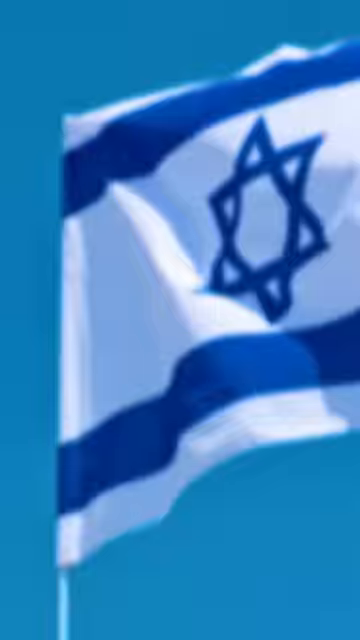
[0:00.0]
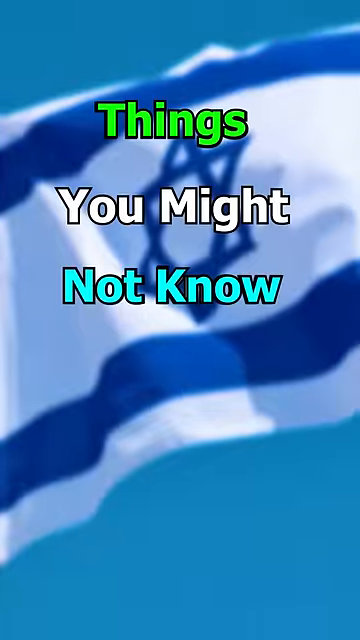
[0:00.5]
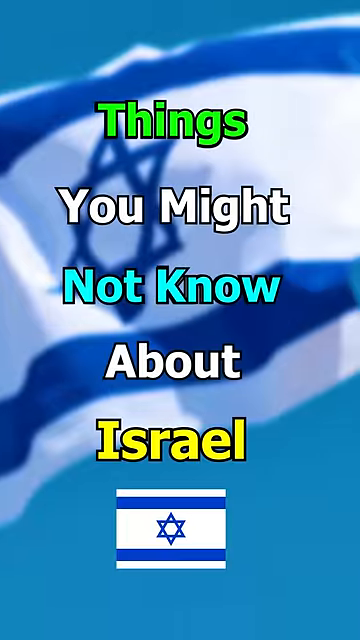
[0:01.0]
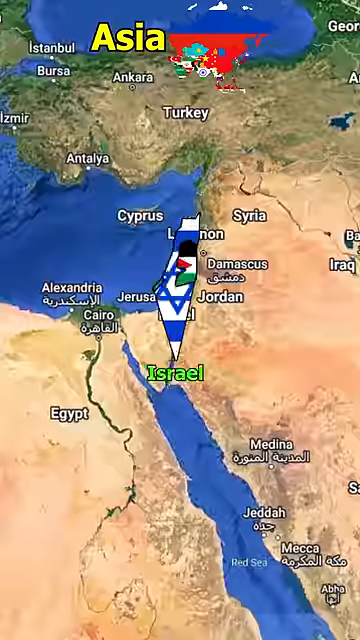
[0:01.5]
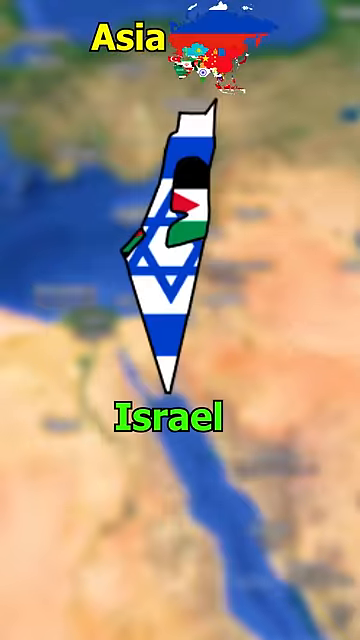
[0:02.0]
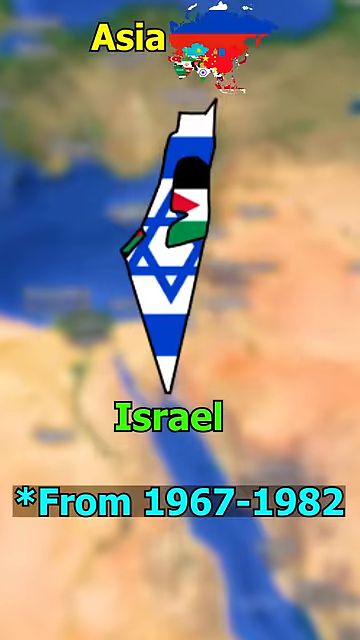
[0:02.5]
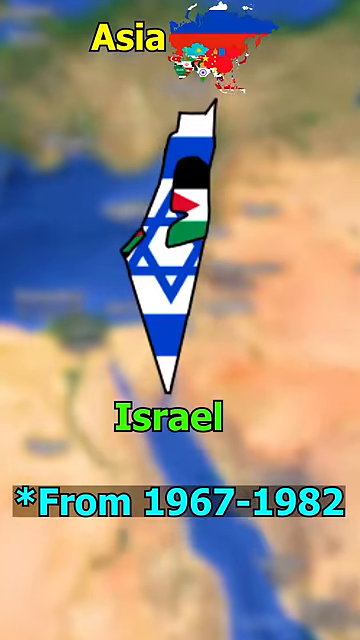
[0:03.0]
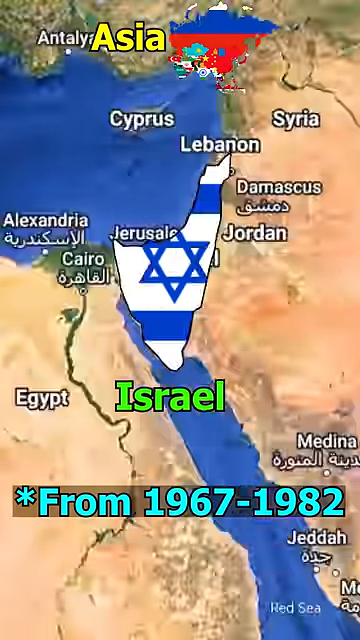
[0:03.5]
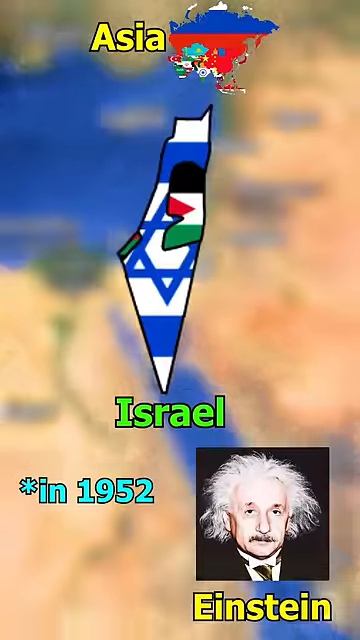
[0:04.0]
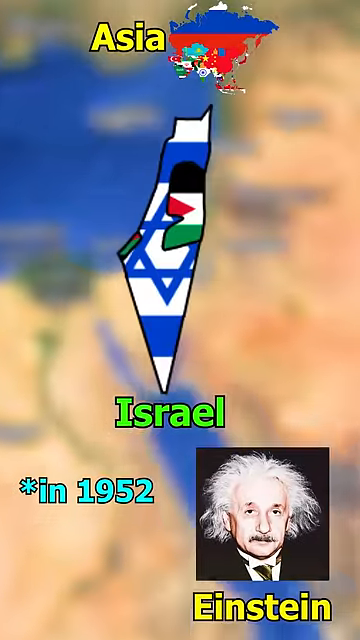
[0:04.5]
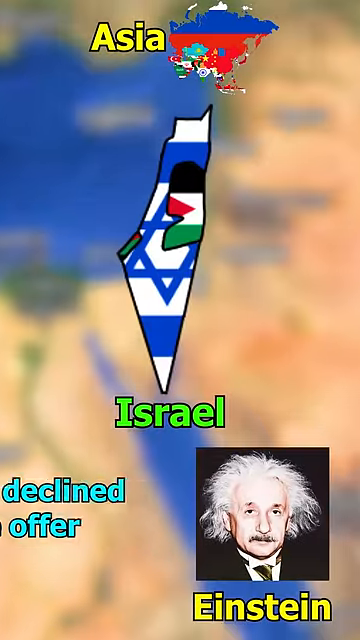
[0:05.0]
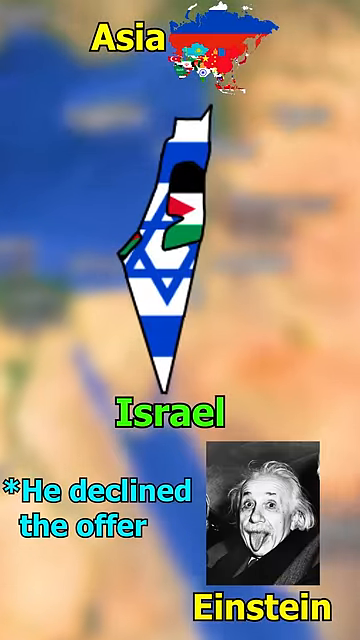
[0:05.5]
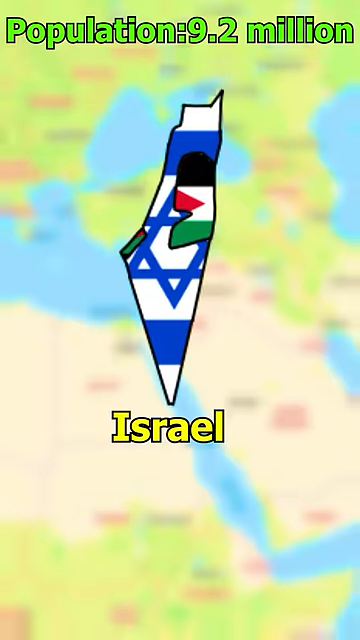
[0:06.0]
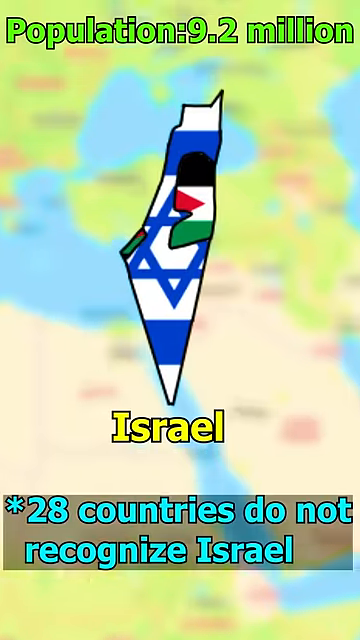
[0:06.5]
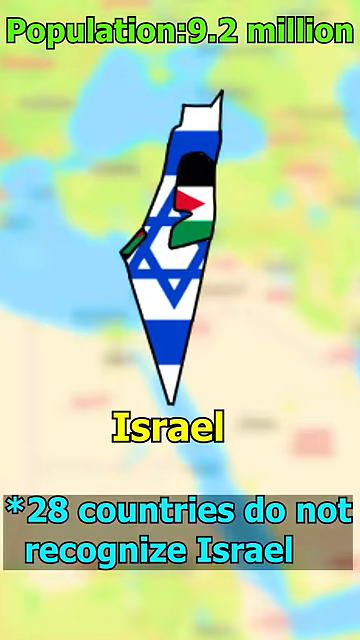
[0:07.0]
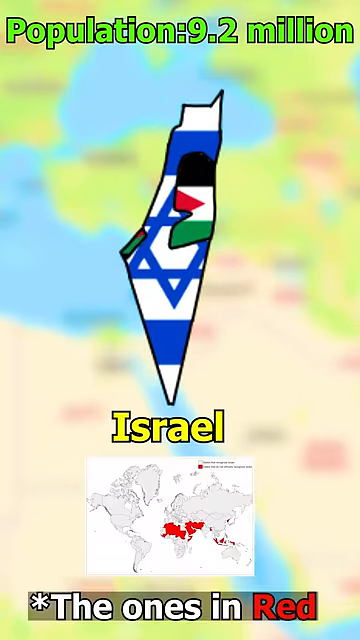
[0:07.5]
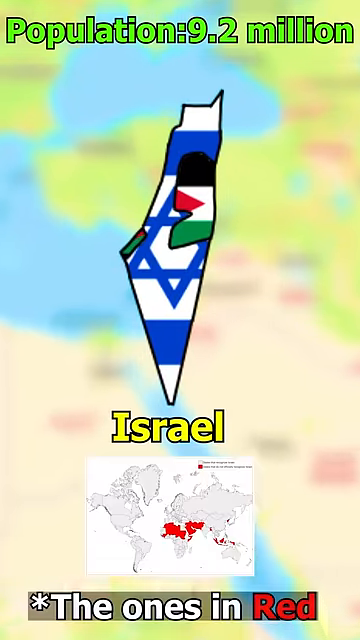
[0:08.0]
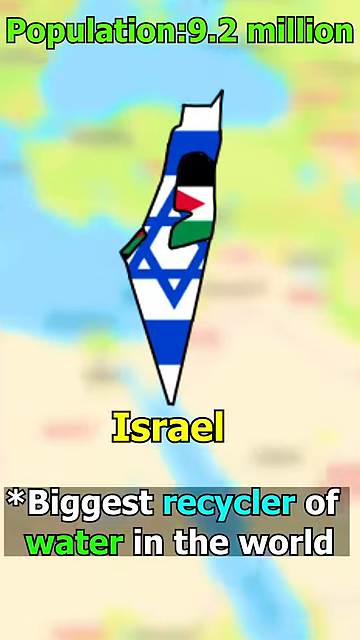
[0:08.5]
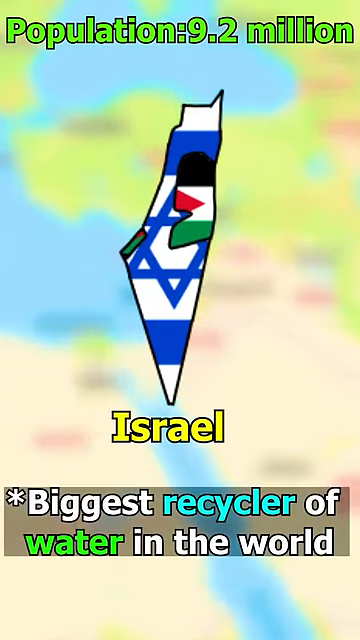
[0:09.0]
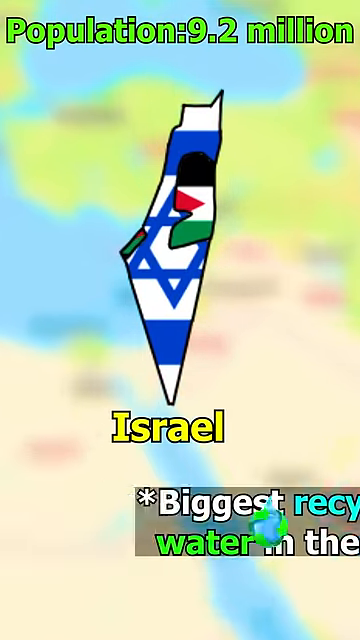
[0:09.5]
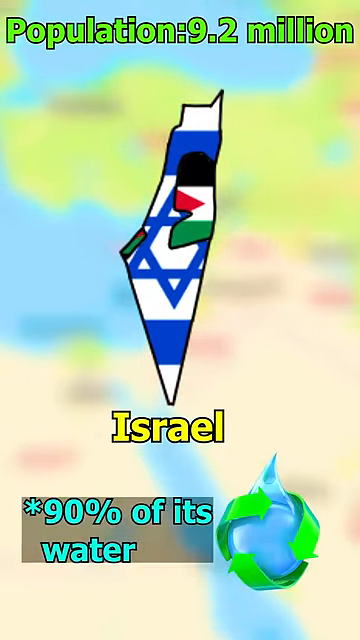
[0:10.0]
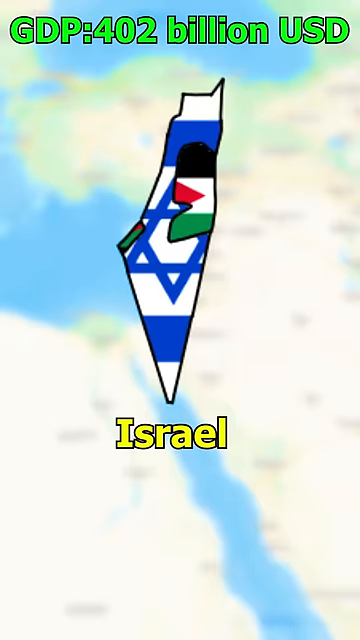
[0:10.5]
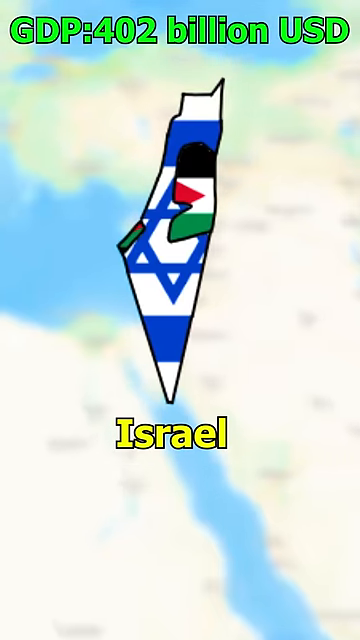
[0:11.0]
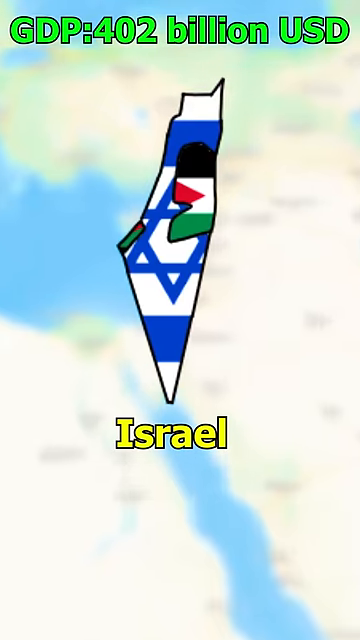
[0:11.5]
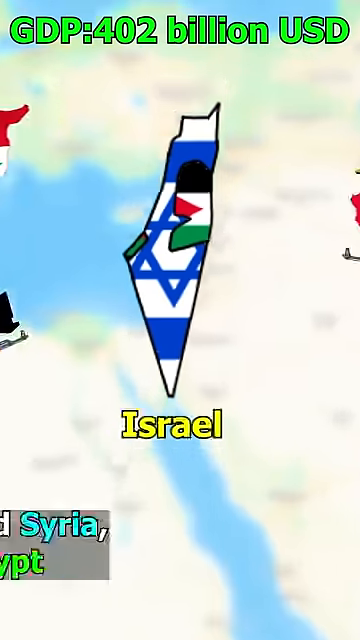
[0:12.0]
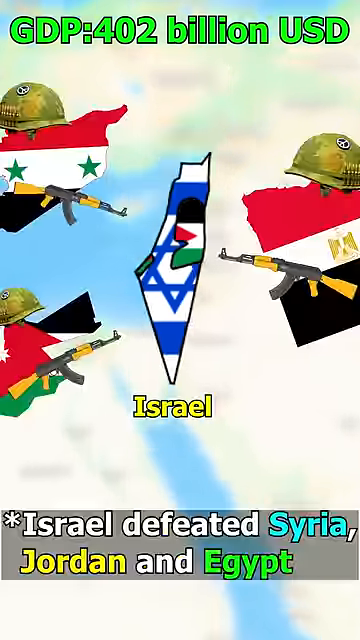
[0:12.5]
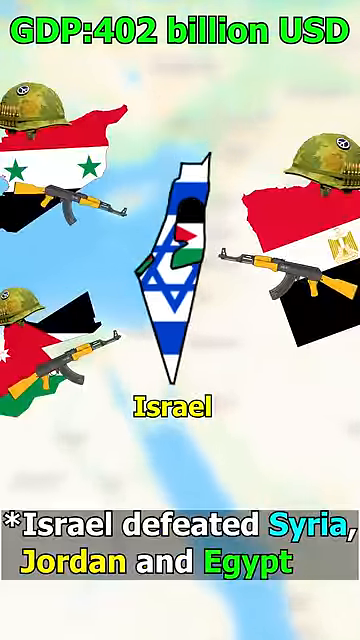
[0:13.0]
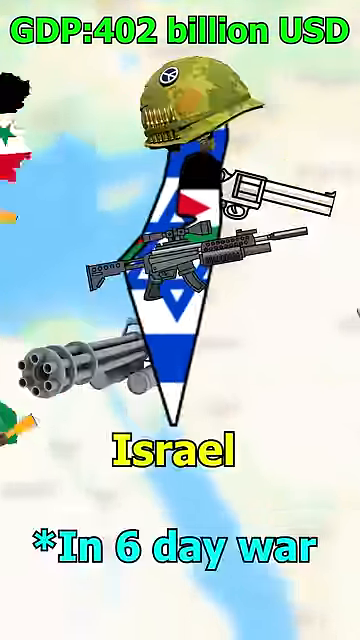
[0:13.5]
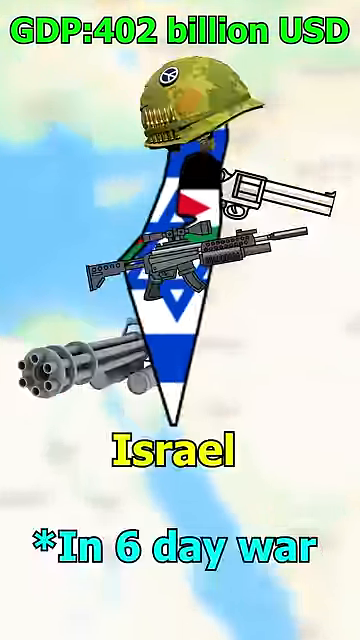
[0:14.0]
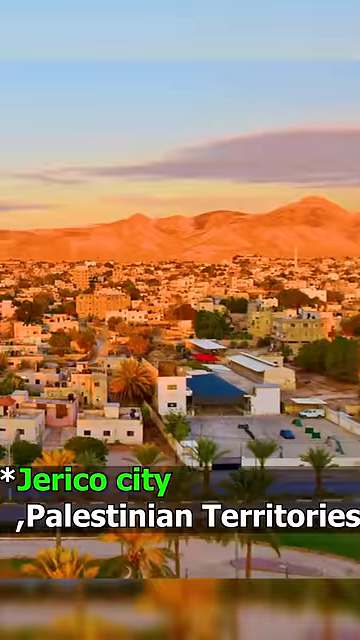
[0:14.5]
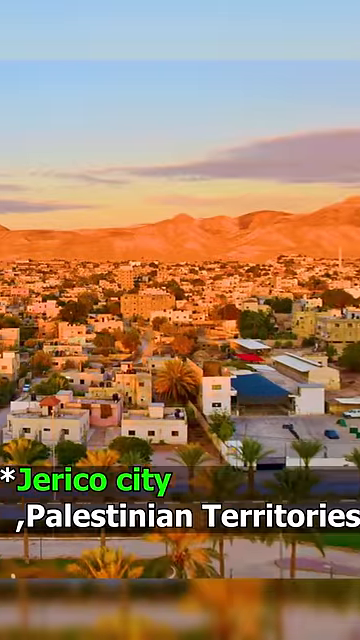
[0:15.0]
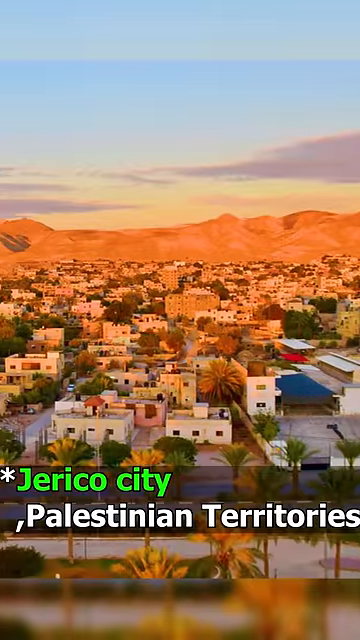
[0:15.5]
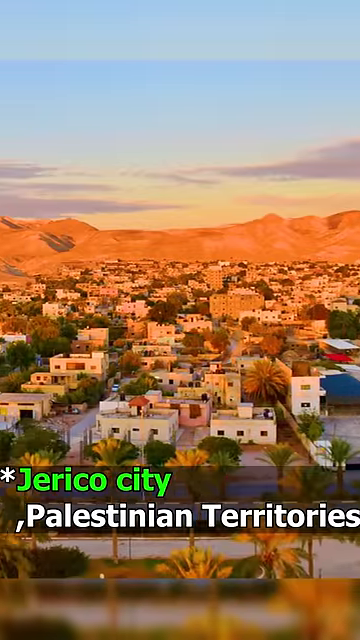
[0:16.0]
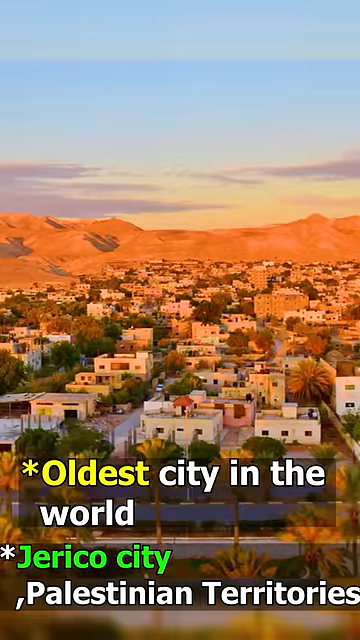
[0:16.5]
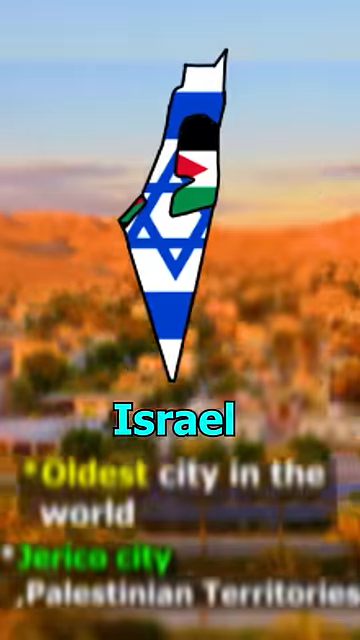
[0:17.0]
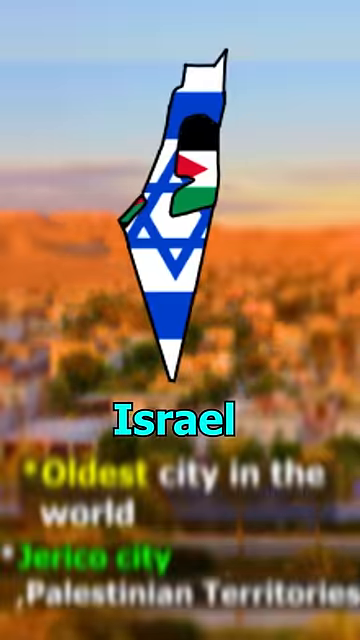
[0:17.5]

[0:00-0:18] The video, titled Things You Might Not Know About Israel, is made up of a series of short clips with a lot of text that moves extremely fast. There appear to be variations of the Israeli flag, and in the background there is what looks like blurry footage of maps, which changes about every few seconds. Text reads "from 1967 to 1982," and a picture of Einstein appears. Various facts about Israel flash by quickly, including "28 countries do not recognize Israel," "Israel recycles 90% of its water," "Israel defeated Syria, Jordan, and Egypt in a six-day war," and "Jericho City, Palestine territories, is one of the oldest cities in the world." A picture of a desert landscape follows, apparently of Palestine.